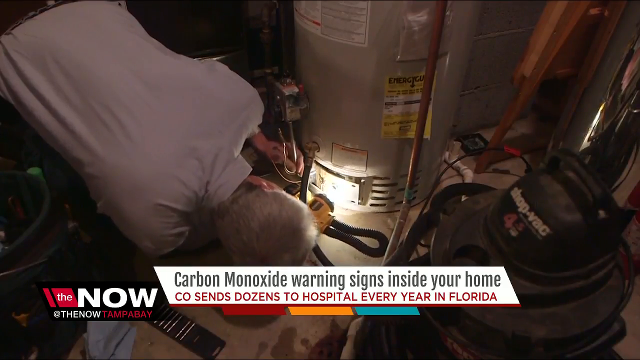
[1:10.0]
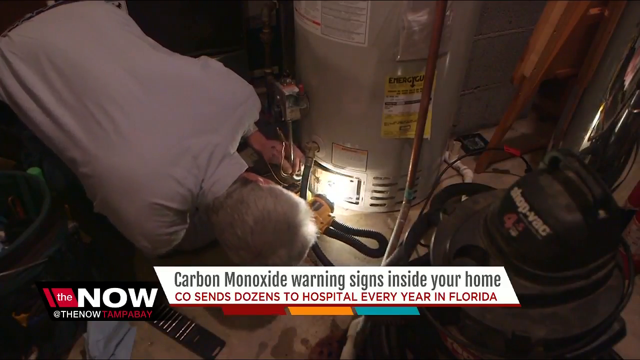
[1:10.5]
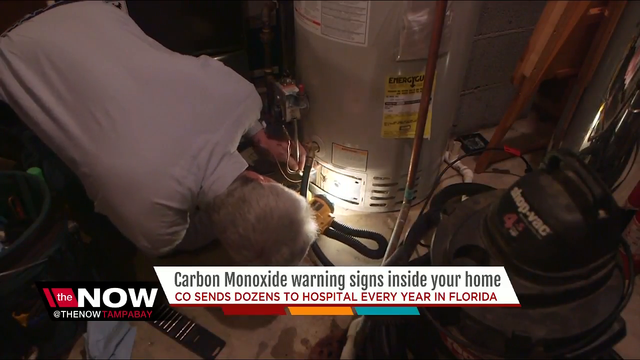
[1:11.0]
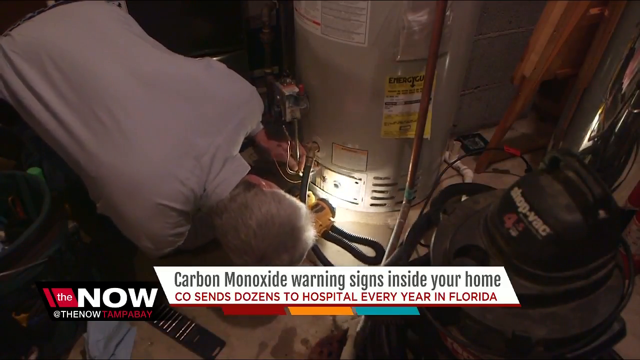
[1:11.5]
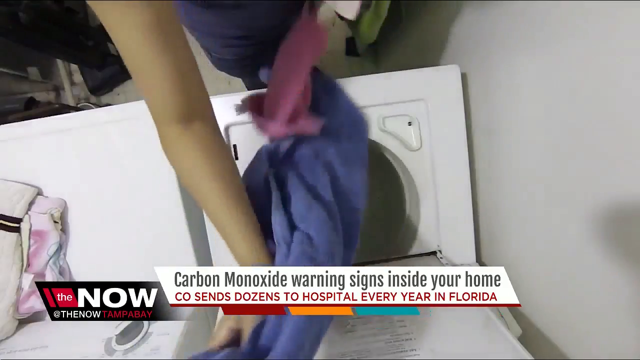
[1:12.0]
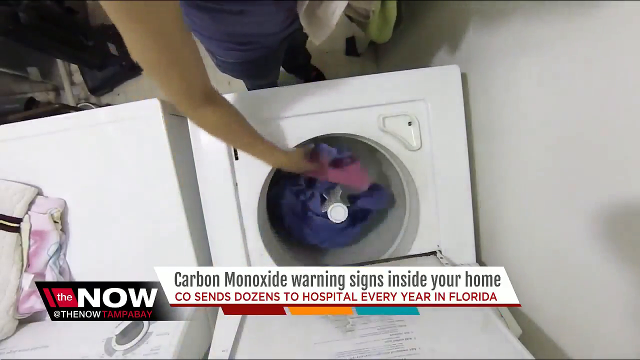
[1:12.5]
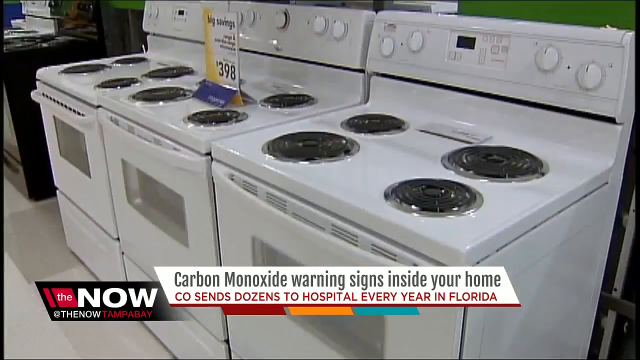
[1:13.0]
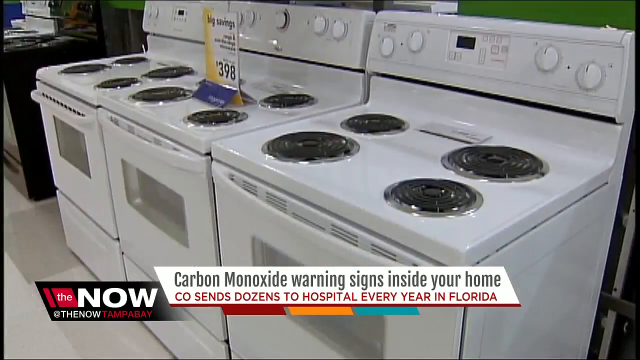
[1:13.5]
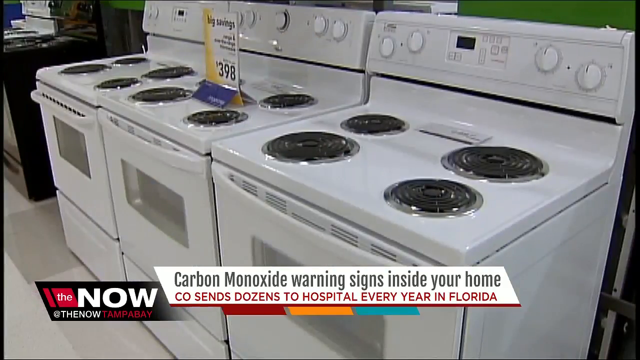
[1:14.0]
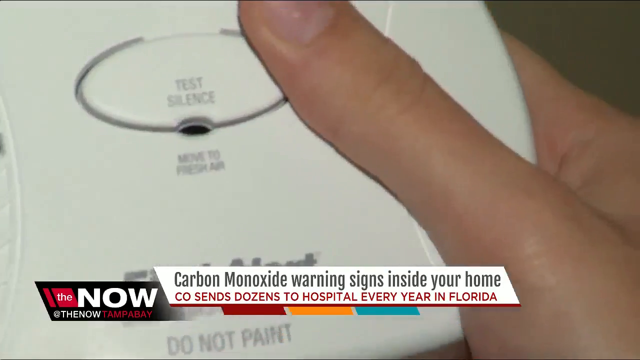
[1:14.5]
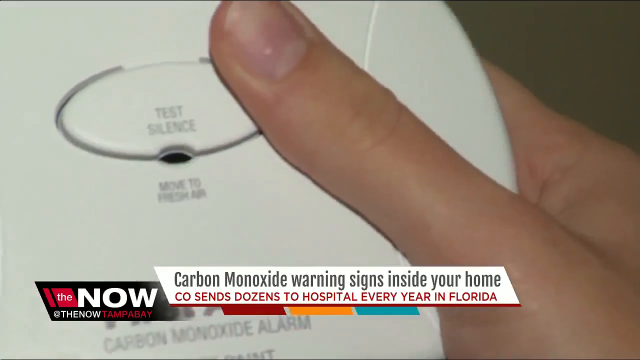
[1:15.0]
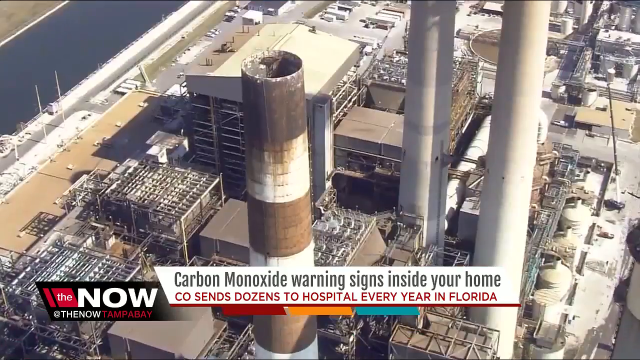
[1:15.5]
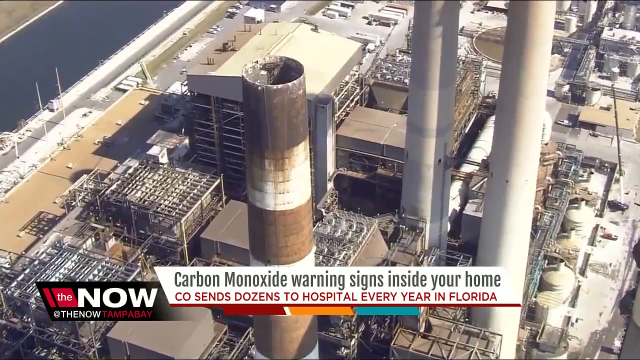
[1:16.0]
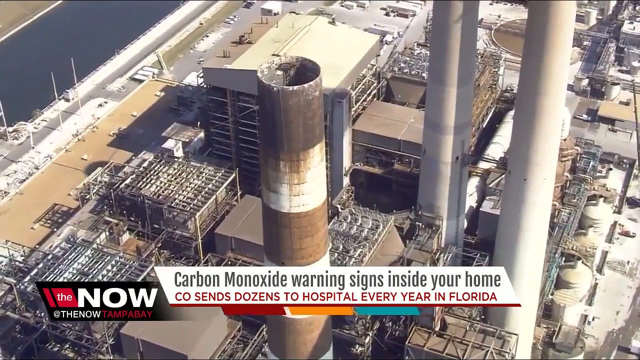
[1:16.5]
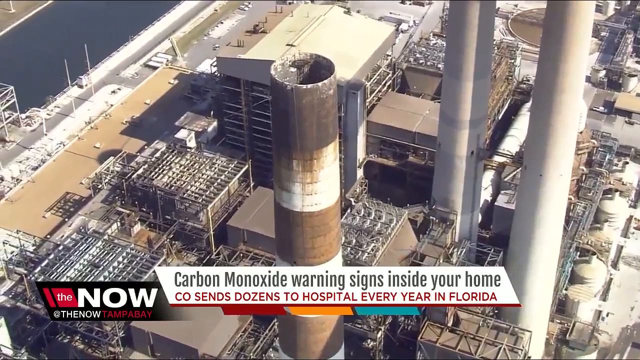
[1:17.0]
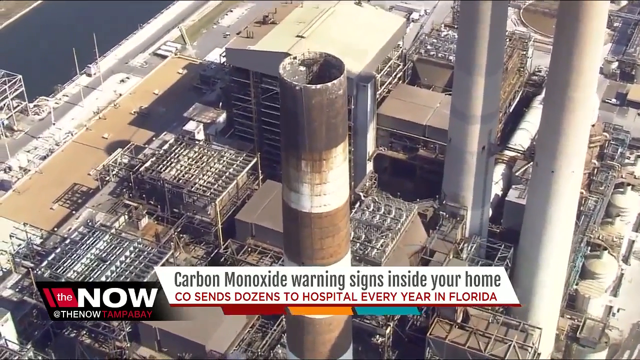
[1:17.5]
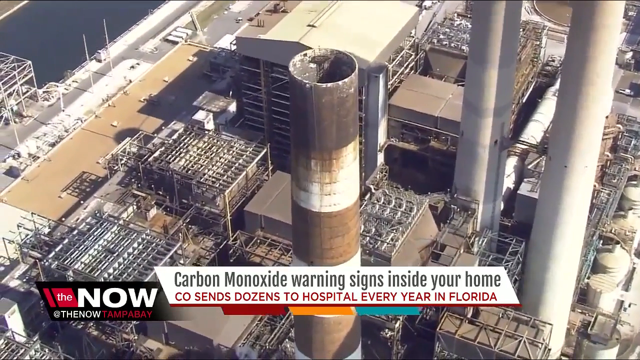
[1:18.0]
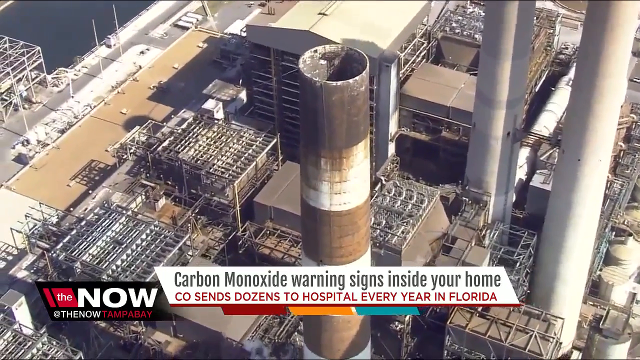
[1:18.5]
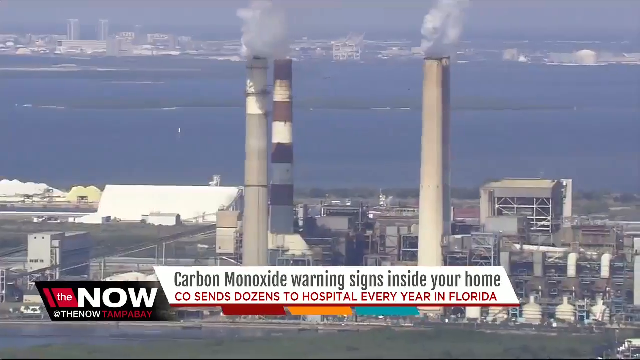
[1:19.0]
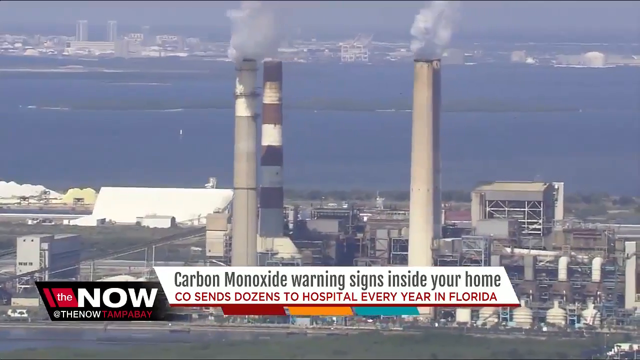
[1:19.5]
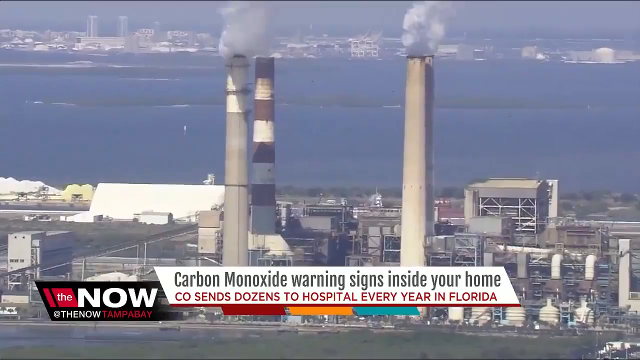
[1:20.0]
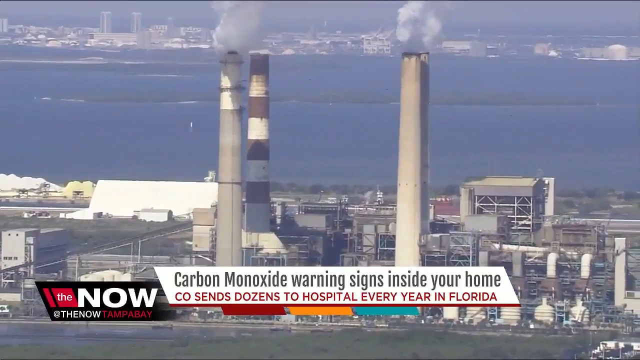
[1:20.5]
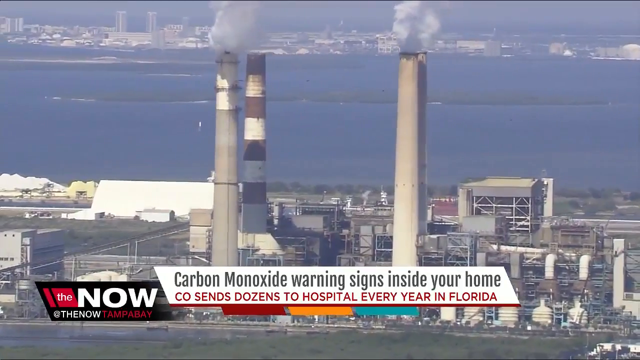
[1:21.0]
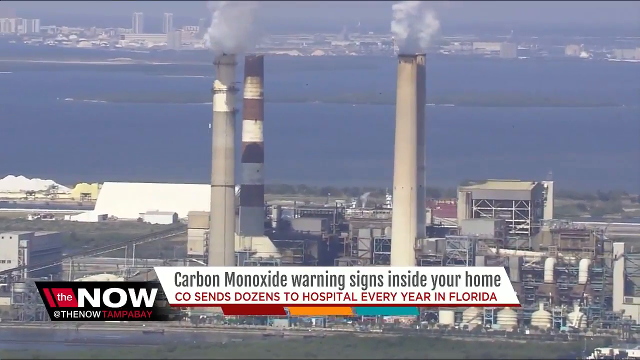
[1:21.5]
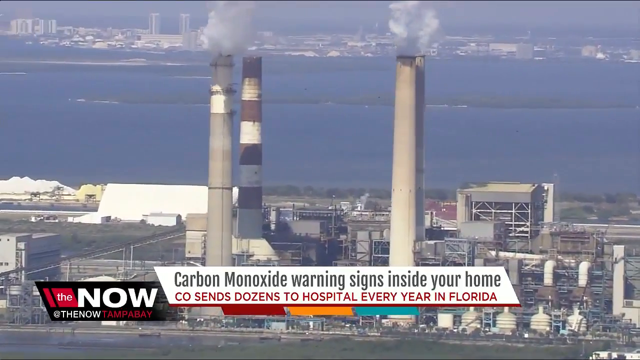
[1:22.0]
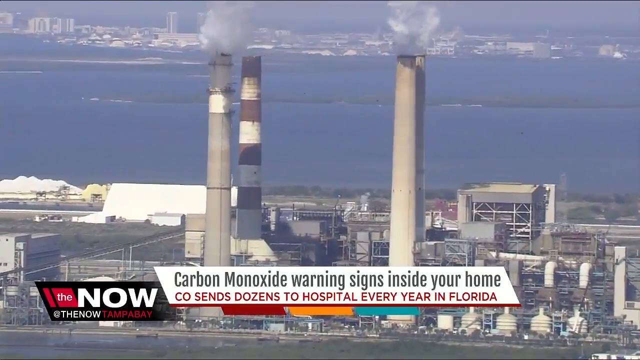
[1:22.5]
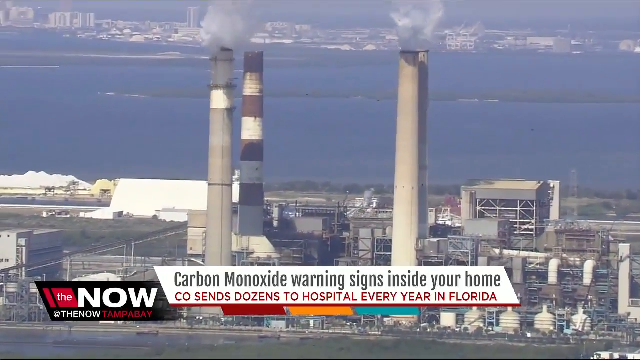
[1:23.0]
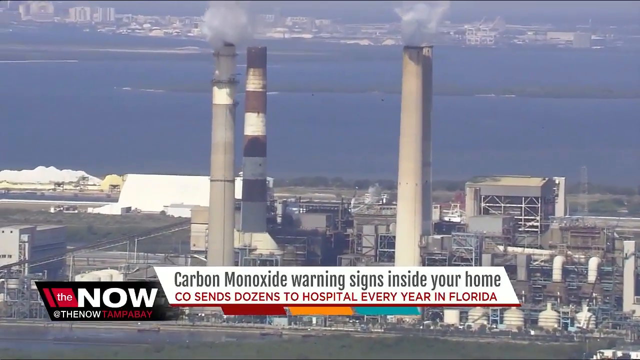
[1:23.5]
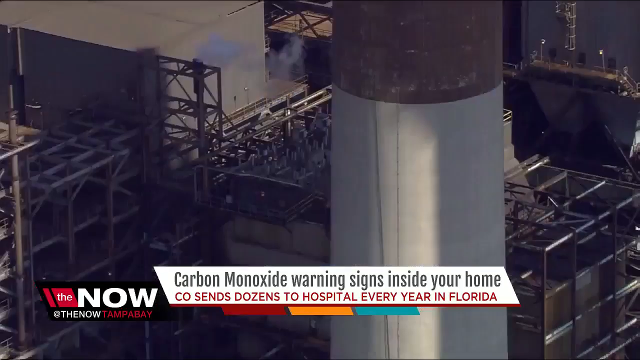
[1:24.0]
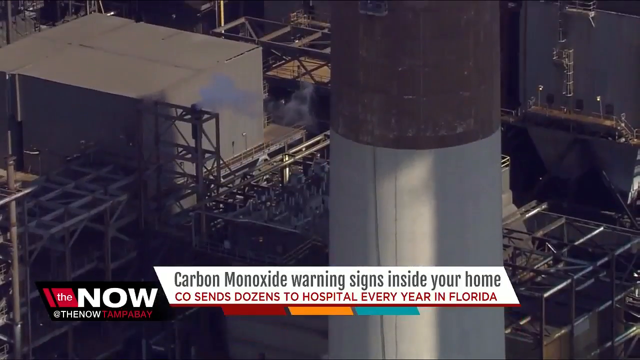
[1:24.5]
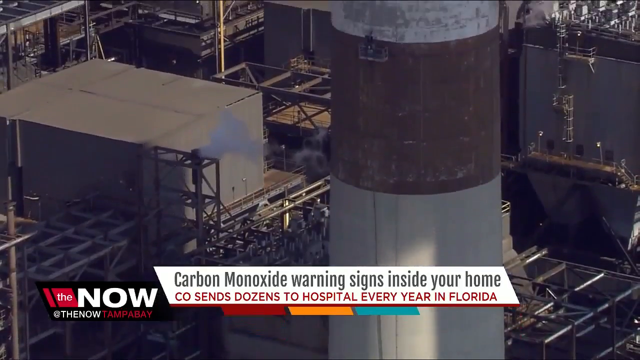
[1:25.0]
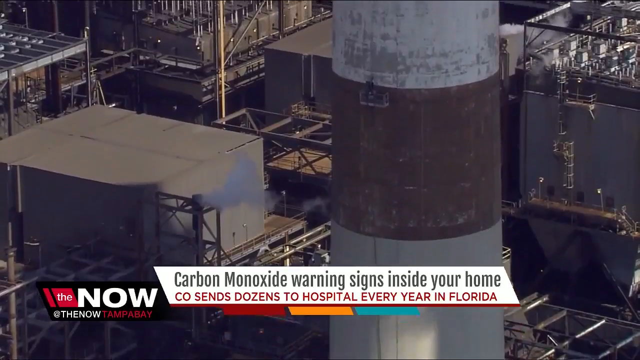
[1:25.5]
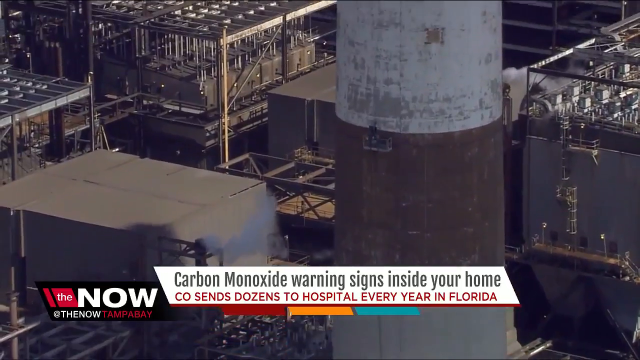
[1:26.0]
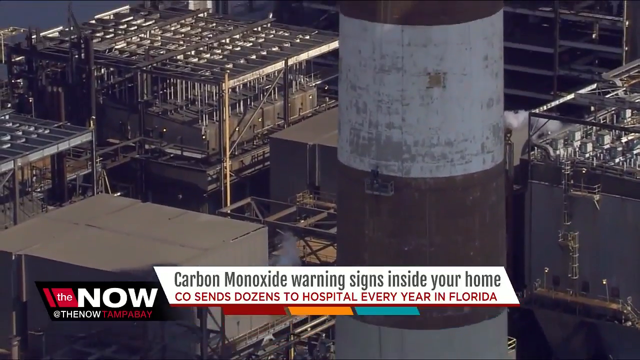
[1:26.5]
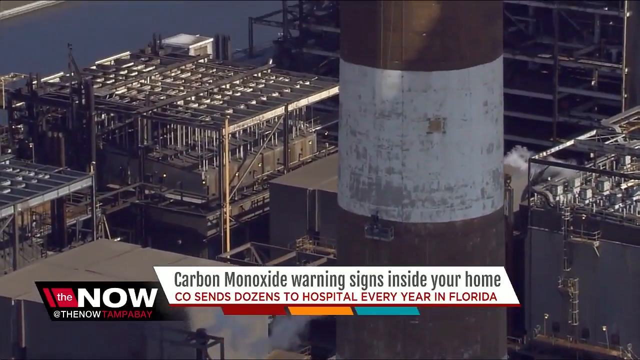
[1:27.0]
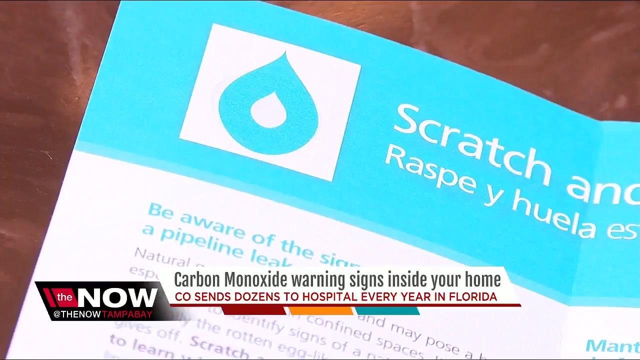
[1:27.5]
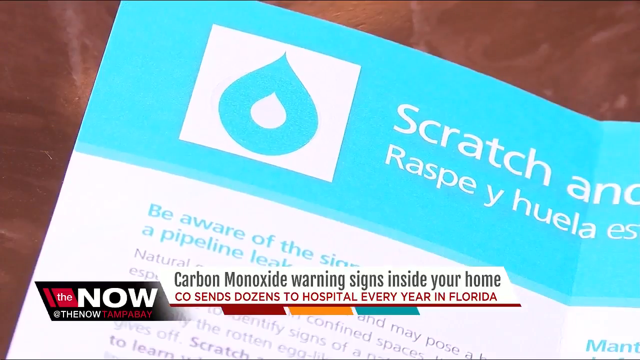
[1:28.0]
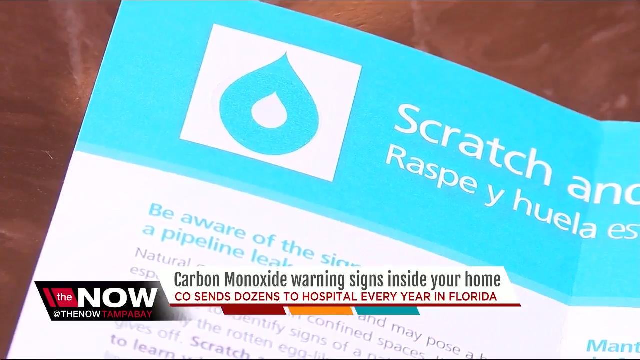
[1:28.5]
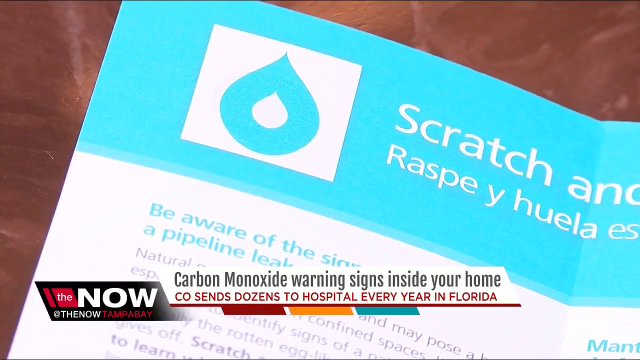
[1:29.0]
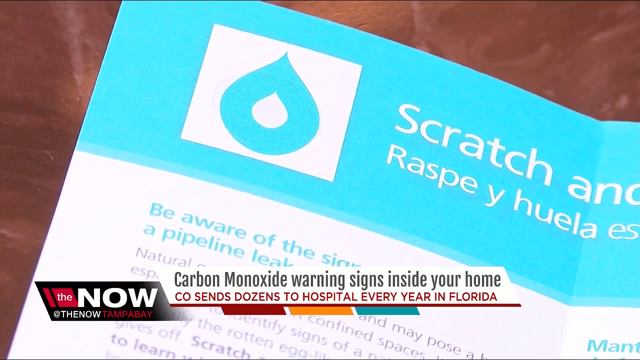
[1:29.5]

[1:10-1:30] Three white stoves are shown, with black burners on top with silver rims and four white digital dials up top. A sign on the middle stove reads in black lettering "Big Savings 398", with a bit of an orange streak on its left side. A white banner underneath reads in black lettering "Carbon Monoxide Warning Signs Inside Your Home", with red lettering below reading "CO sends dozens to hospital every year in Florida". On the bottom left is the black banner with a red box holding "the" in white, "now" beside it in a large font, "at the now" underneath on the left, and "Tampa Bay" in red lettering. The video then goes back to the person holding the white device, their thumb visible; the device reads "Test Silence" and "First Alert". The next scene shows off-white and dark gray smokestacks above flat gray and off-white buildings at the bottom, with white smoke coming out of the very top, bluish water in the background and a blue sky. The camera zooms in to the plant itself, with grayish squarish buildings and a brown and off-white smokestack. The next image shows a sheet of paper with a teal blue top, white lettering reading "scratch", and lettering underneath in another language. There is a white box with a blue drop of water containing an inner water-drop image.